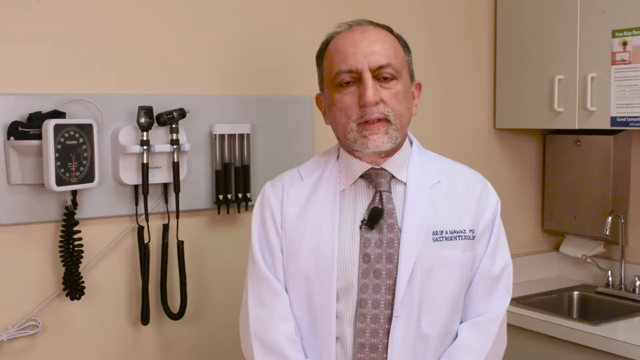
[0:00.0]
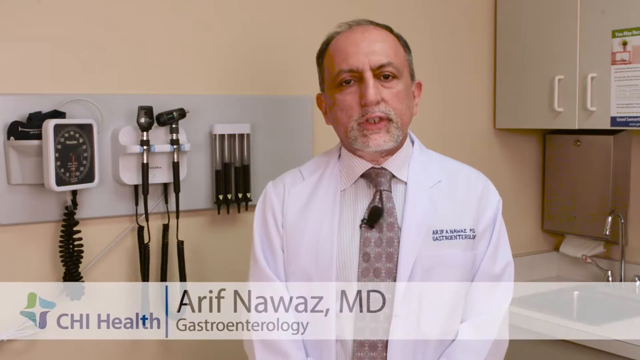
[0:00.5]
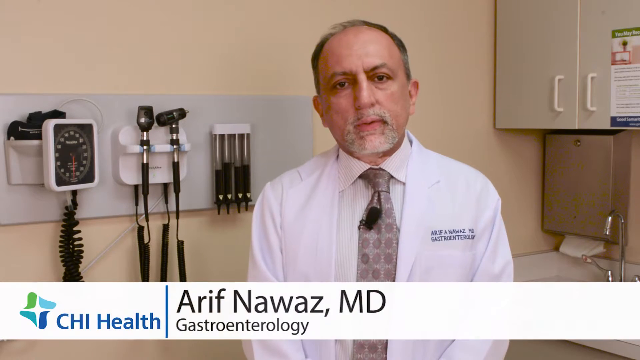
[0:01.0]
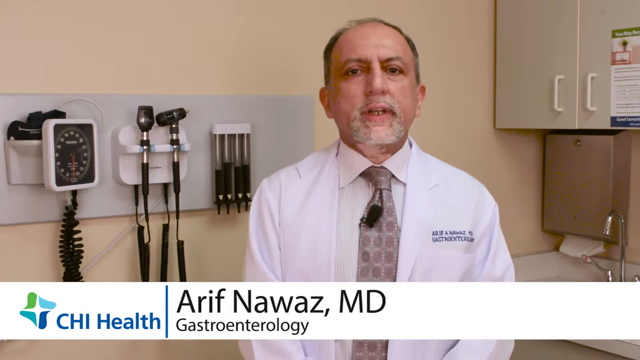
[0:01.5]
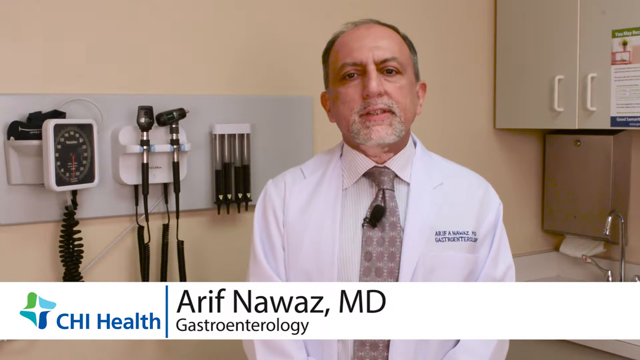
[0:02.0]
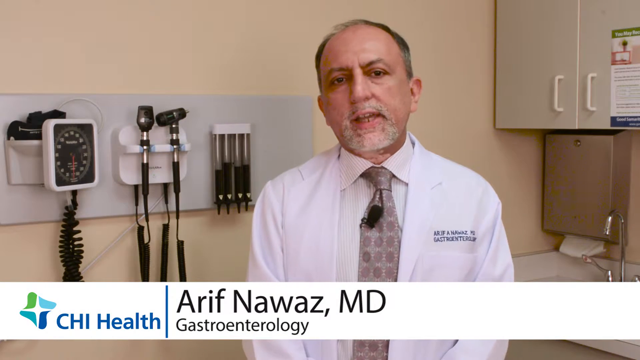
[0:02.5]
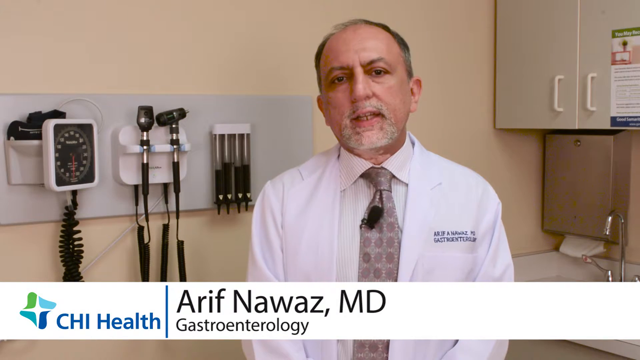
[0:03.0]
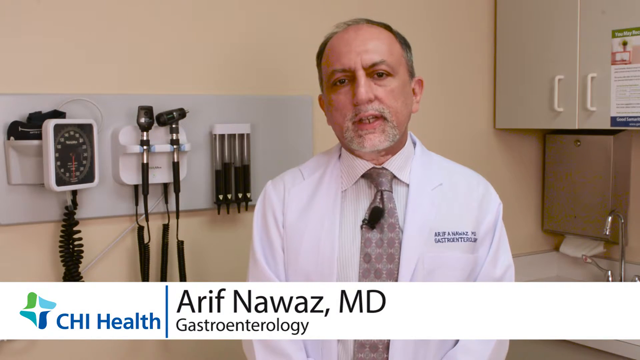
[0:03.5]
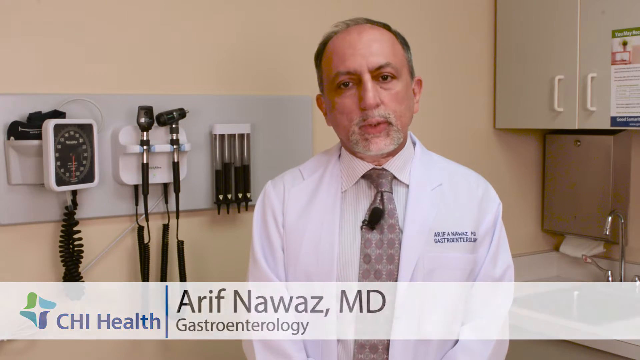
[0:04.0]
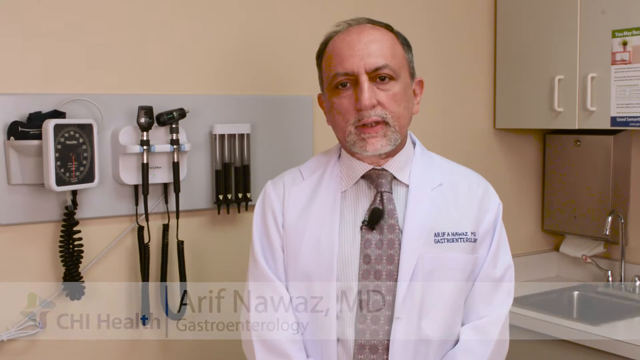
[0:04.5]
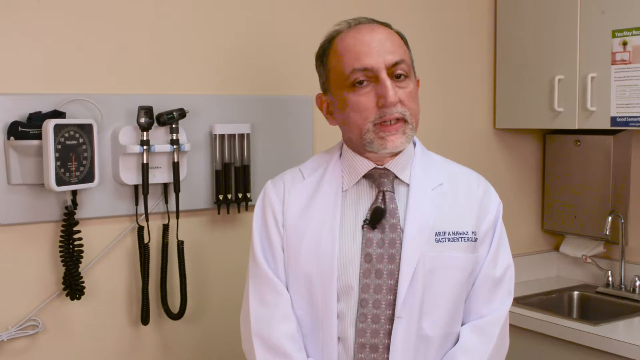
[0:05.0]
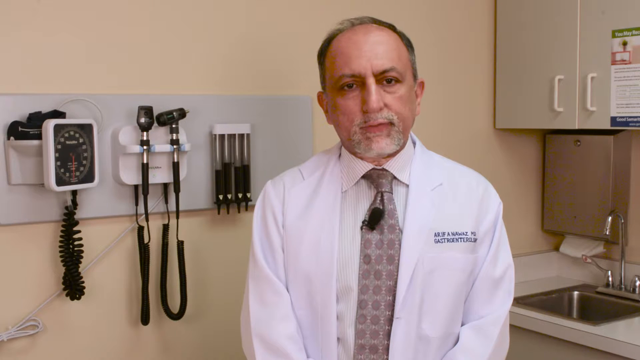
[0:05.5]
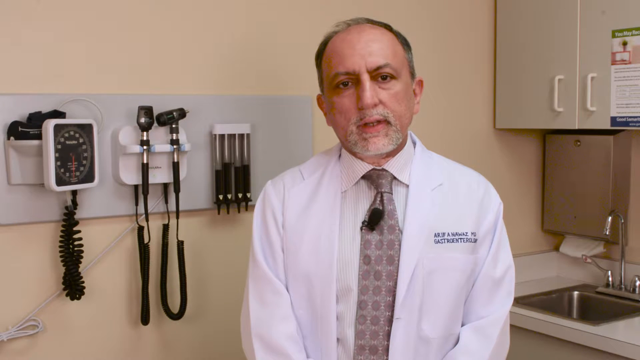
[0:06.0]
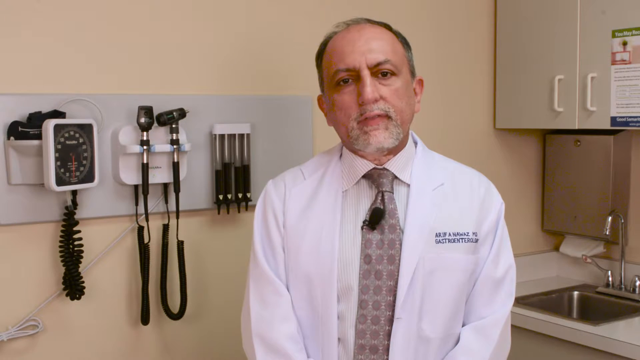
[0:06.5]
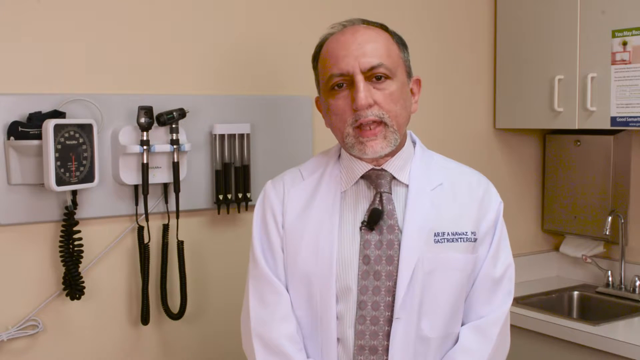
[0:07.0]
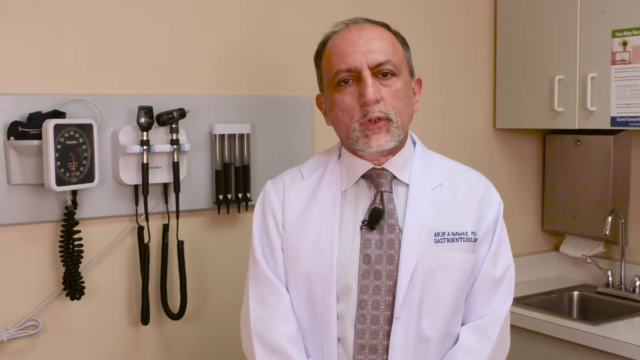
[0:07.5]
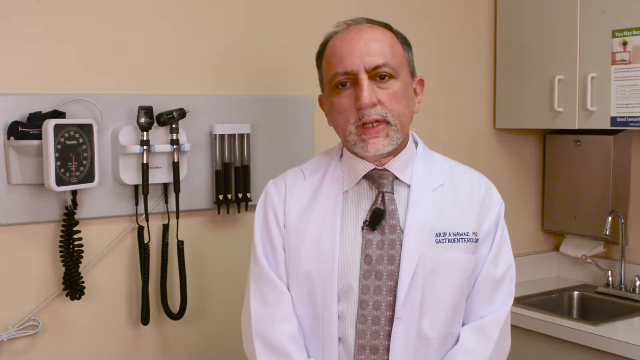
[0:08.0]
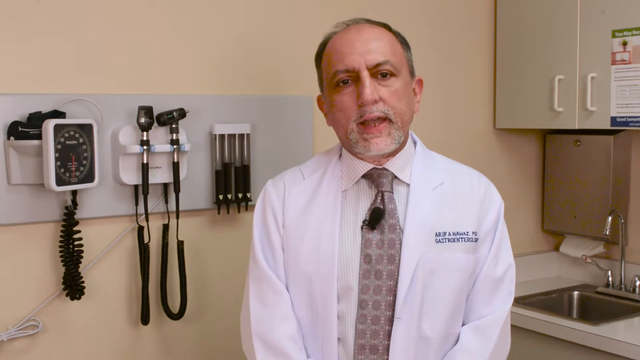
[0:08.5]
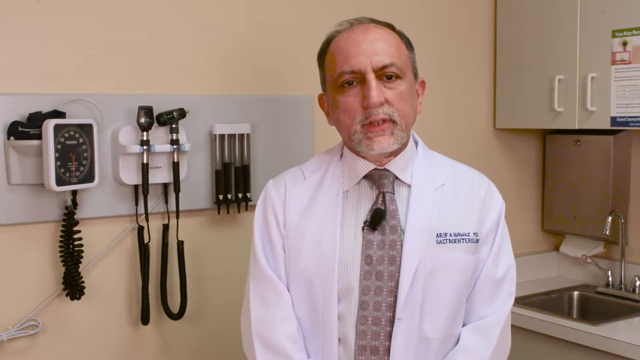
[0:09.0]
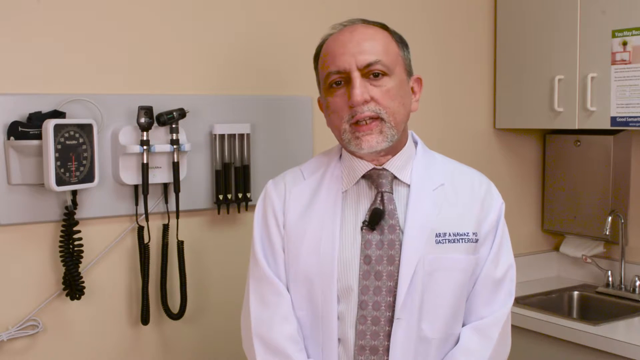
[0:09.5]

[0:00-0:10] A doctor with thinning dark and grey speckled hair and a grey beard wears a white doctor's coat over his shirt and tie, with what appears to be a microphone attached to his tie. He is sitting in what is apparently a doctor's office: behind him to the right is a sink, and to the left are various instruments, for example a blood pressure reader and the device that looks inside ears. He talks directly to the camera as his name pops up on screen: "Arif Nawaz, MD, Gastroenterology". He appears to work for CHI Health. While talking, he keeps his body still but moves his head a little with slight gestures.